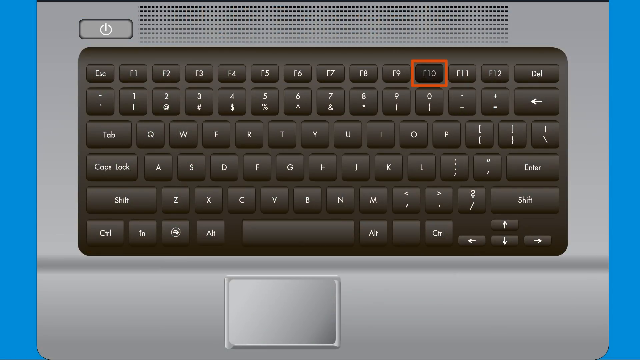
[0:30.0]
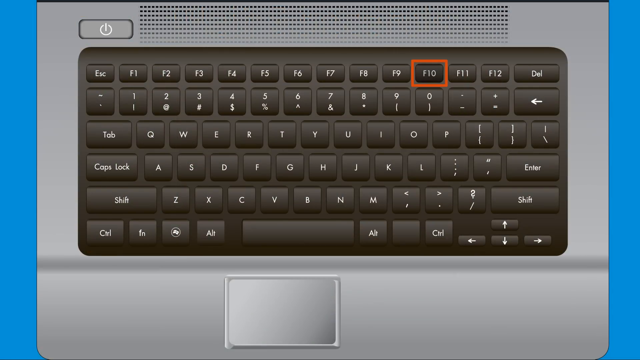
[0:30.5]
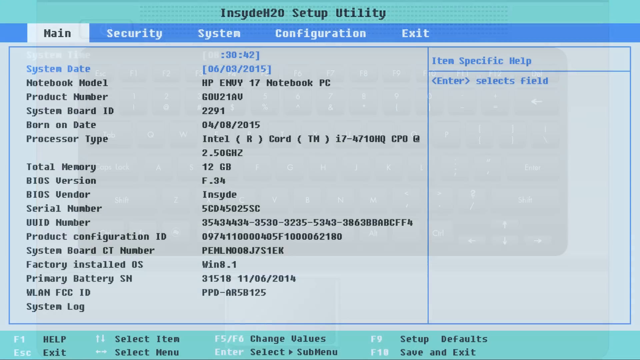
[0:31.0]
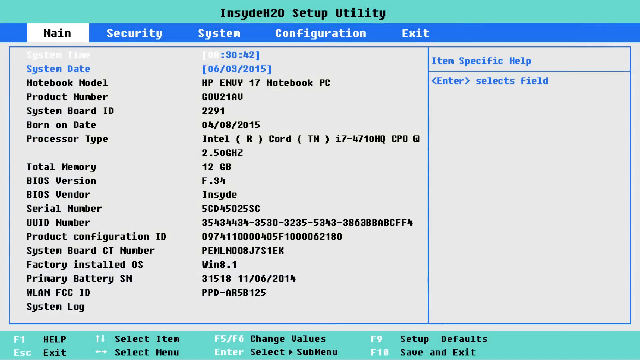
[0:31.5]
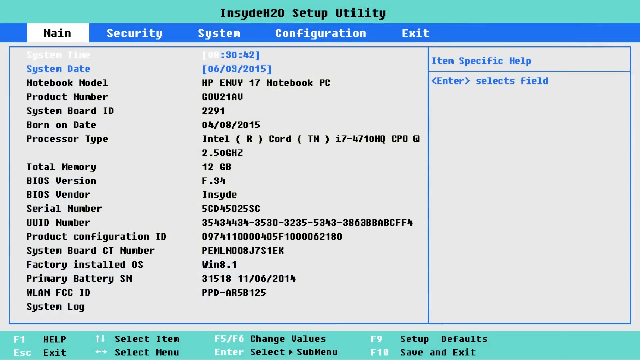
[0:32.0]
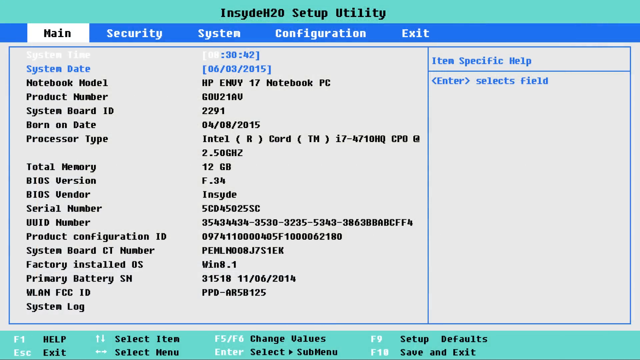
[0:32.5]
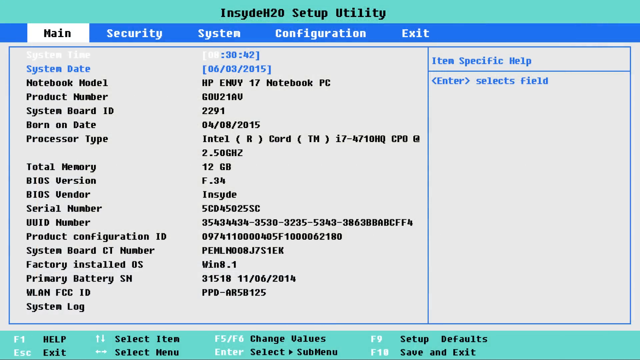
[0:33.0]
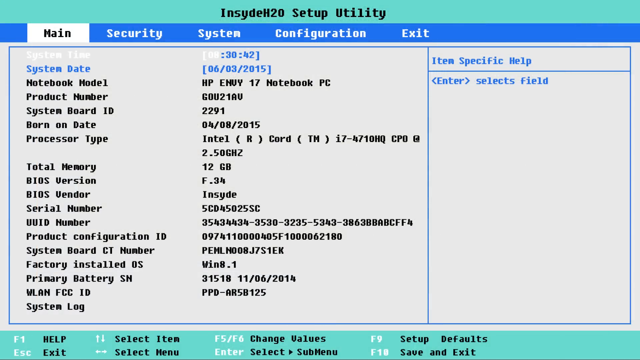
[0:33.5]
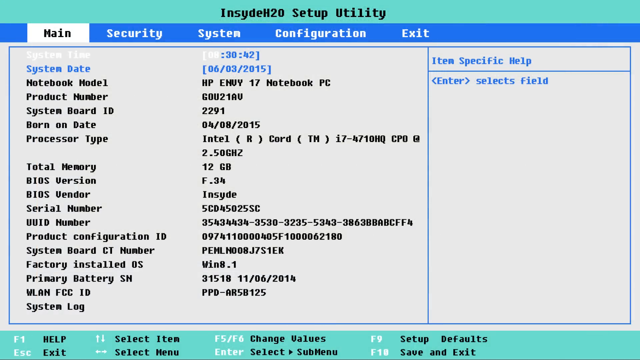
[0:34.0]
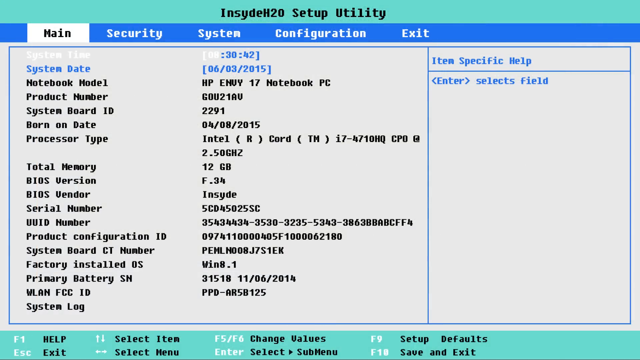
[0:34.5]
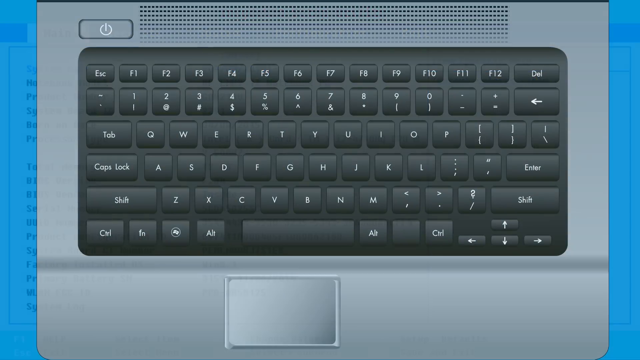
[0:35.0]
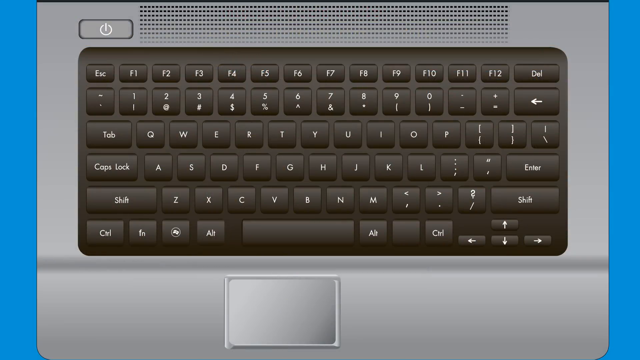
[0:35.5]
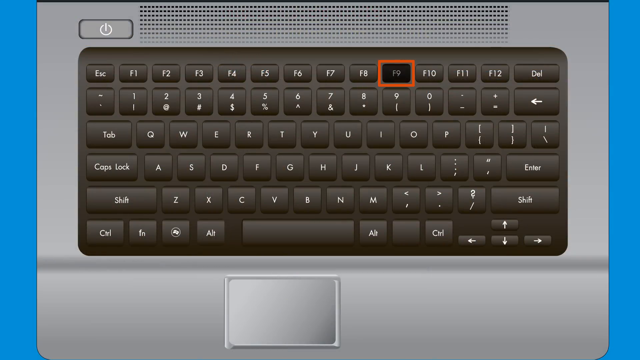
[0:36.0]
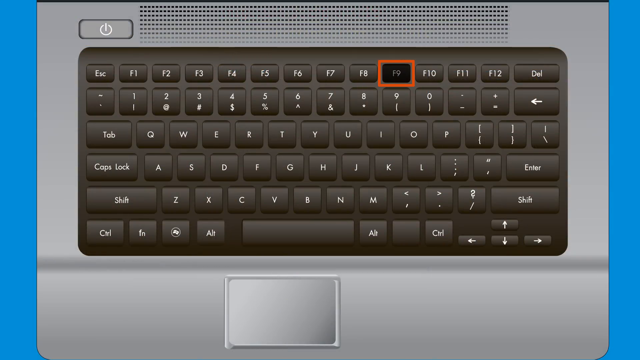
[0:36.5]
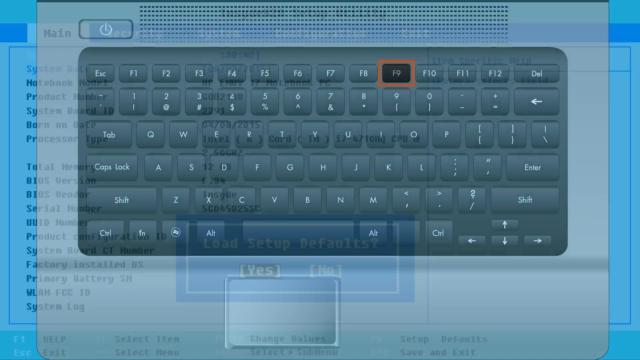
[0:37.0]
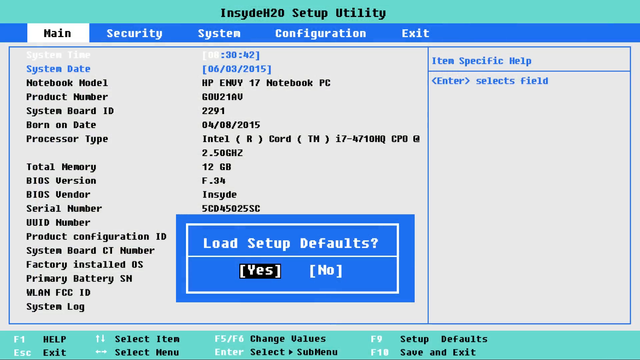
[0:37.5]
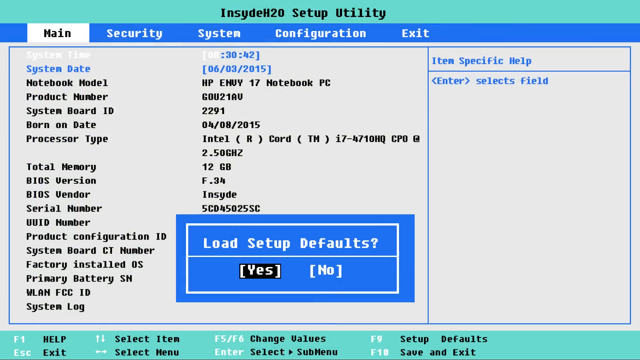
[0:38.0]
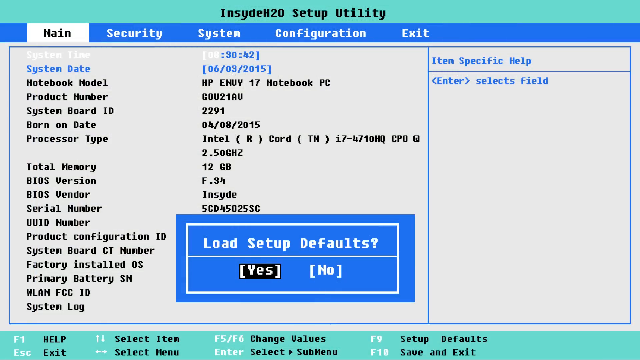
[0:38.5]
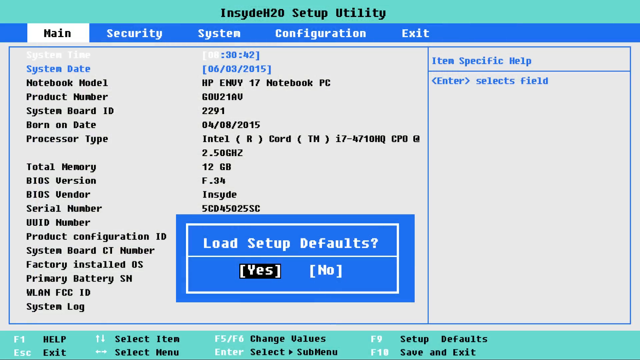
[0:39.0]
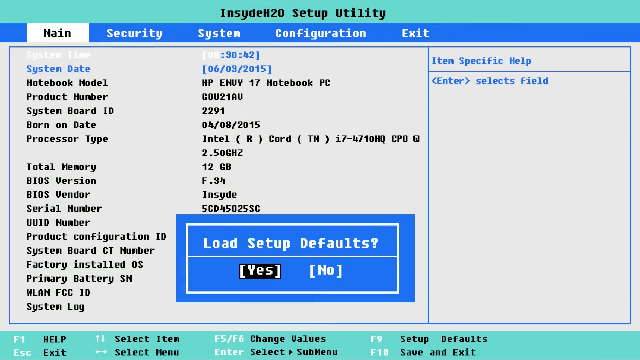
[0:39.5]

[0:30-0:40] The highlighted key is on the top right of the laptop's keyboard. The keyboard seems to be a standard one, with F keys at the top, numbers in the second row and a standard ASDF layout. There is a trackpad underneath, and the laptop chassis is gray. The next screen shows a setup utility with many lines such as notebook model, product number, system board ID, born on dates, processor type and many other BIOS settings. The view goes back to the laptop keyboard with the F9 key highlighted in an orange box, then returns to the setup utility, which now has an option to "load setup defaults" with yes and no; yes is selected and highlighted in black.